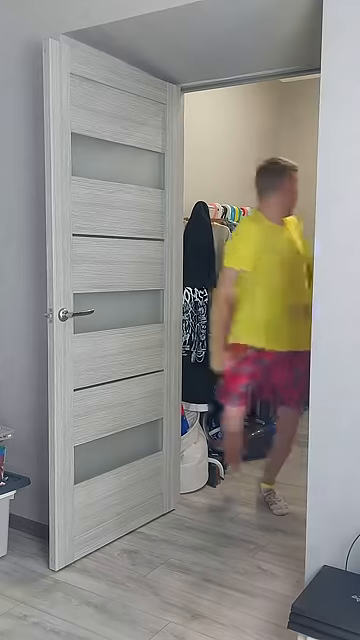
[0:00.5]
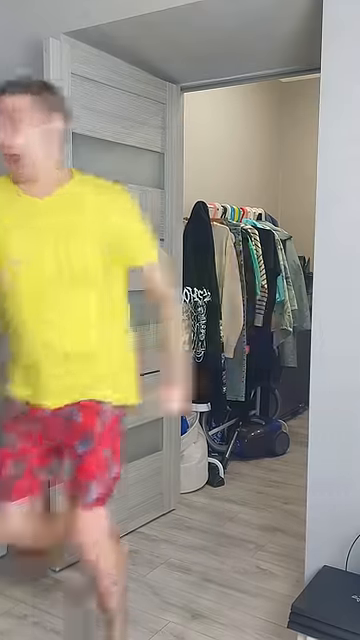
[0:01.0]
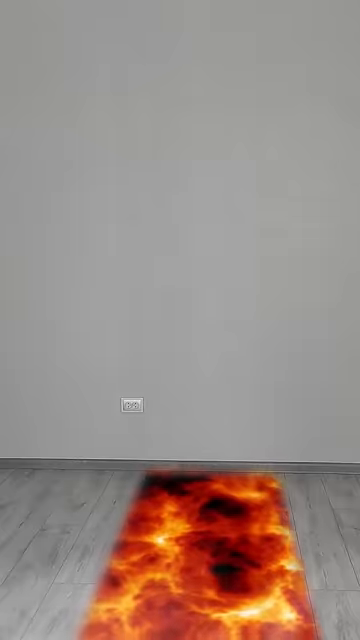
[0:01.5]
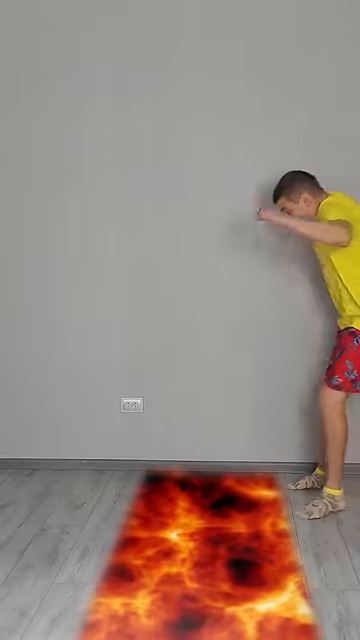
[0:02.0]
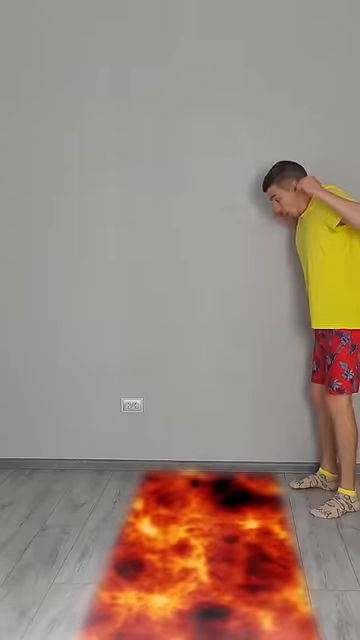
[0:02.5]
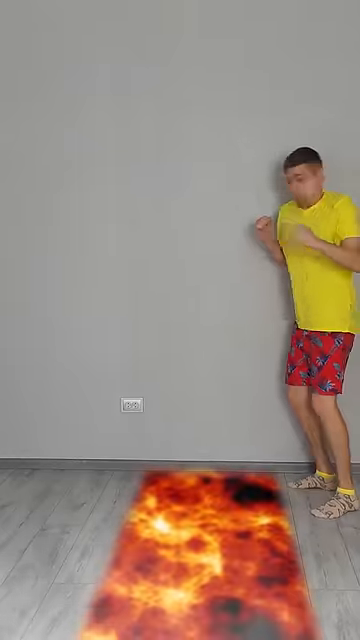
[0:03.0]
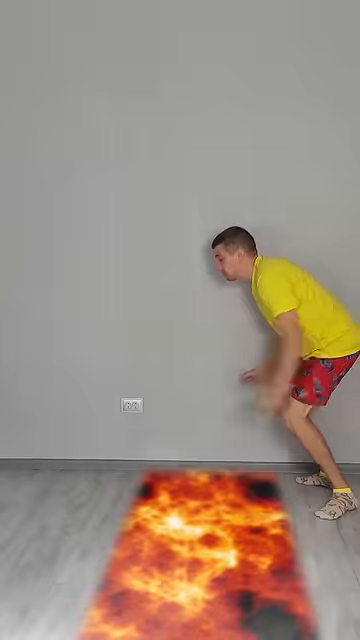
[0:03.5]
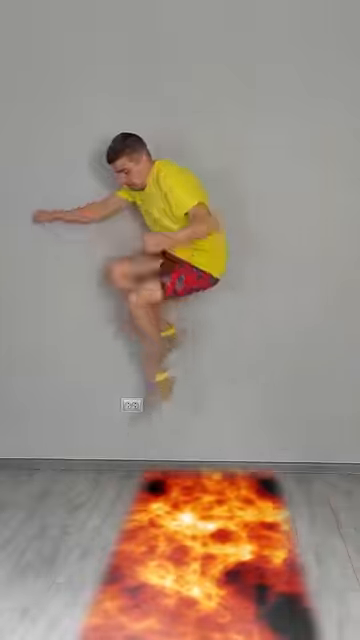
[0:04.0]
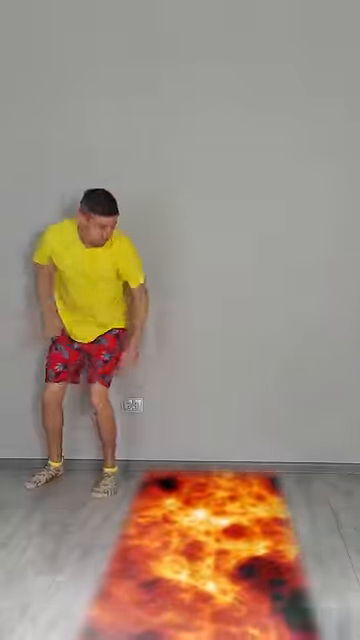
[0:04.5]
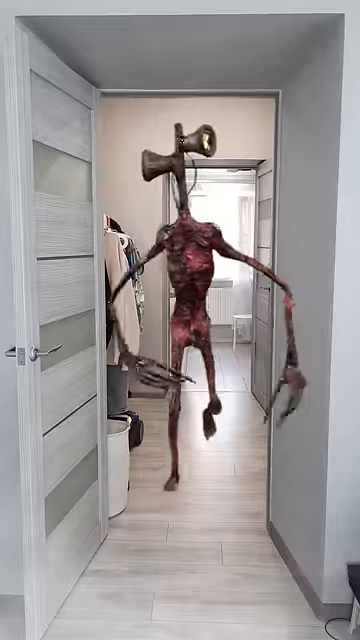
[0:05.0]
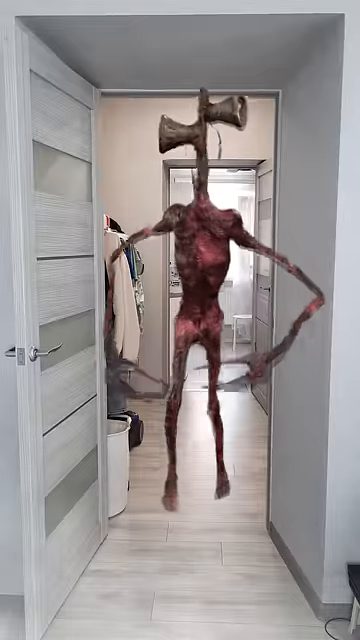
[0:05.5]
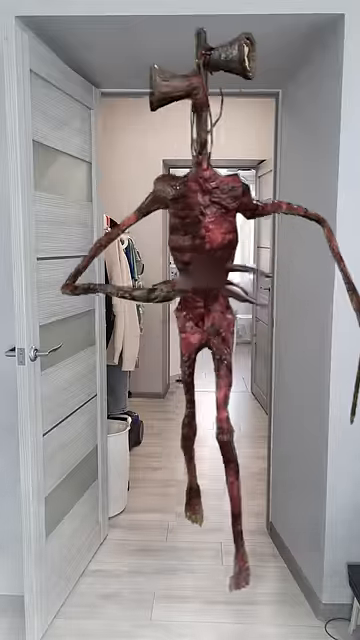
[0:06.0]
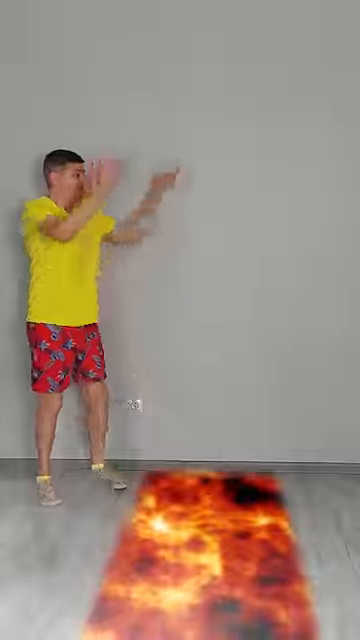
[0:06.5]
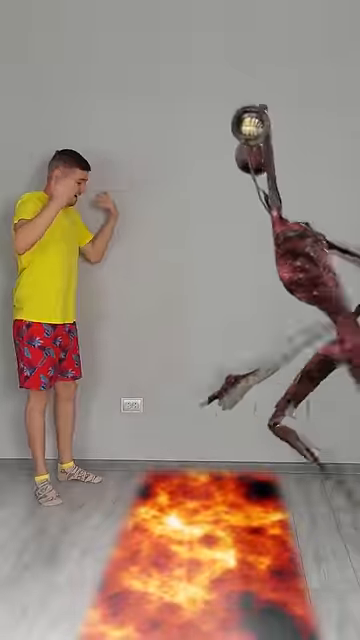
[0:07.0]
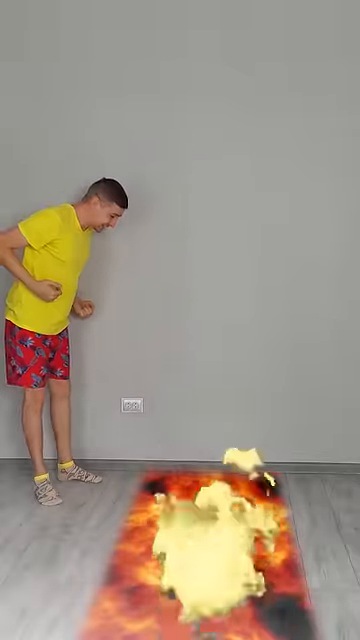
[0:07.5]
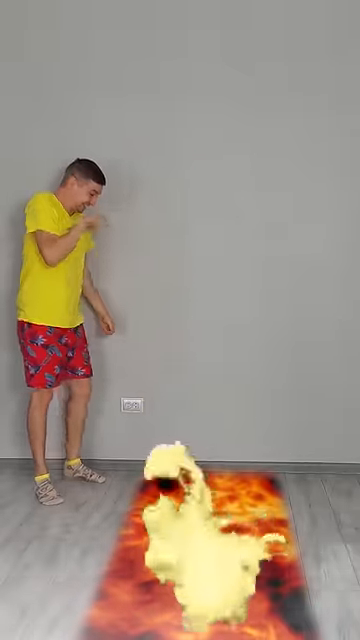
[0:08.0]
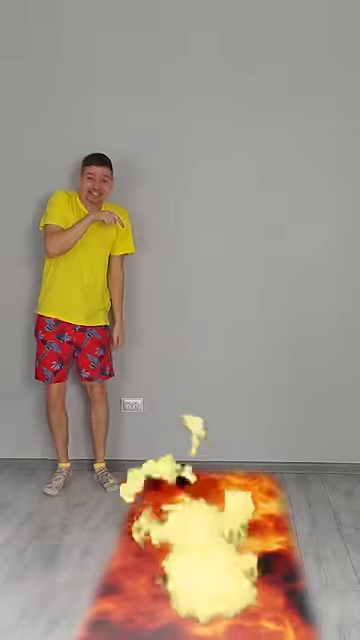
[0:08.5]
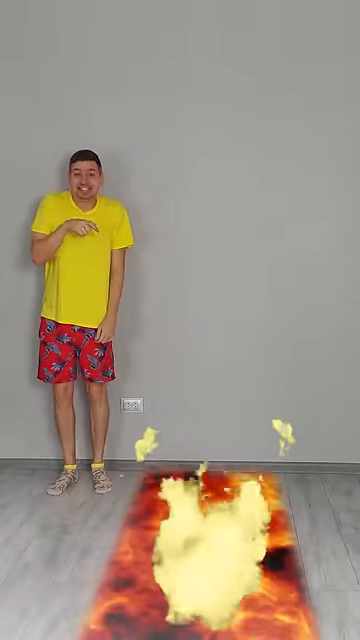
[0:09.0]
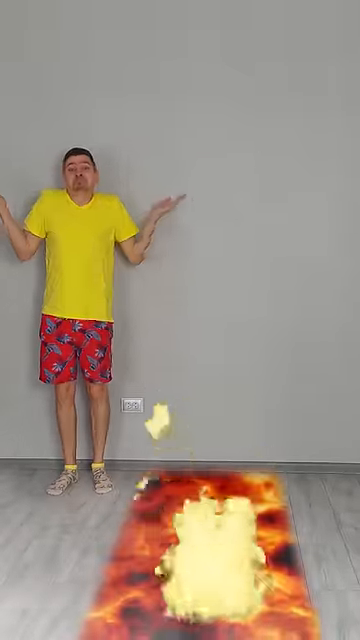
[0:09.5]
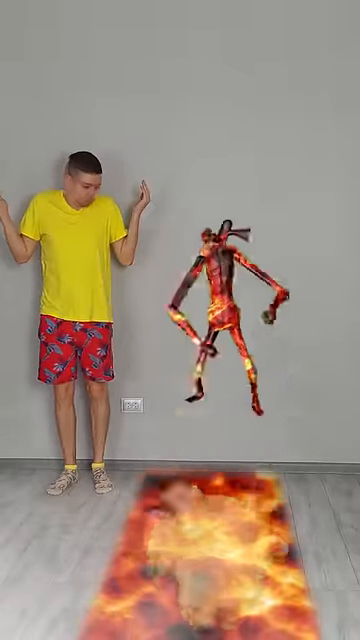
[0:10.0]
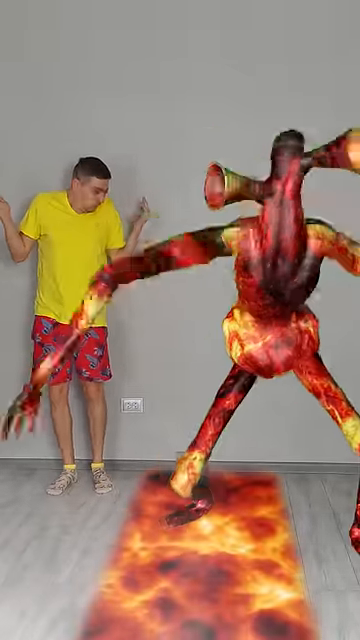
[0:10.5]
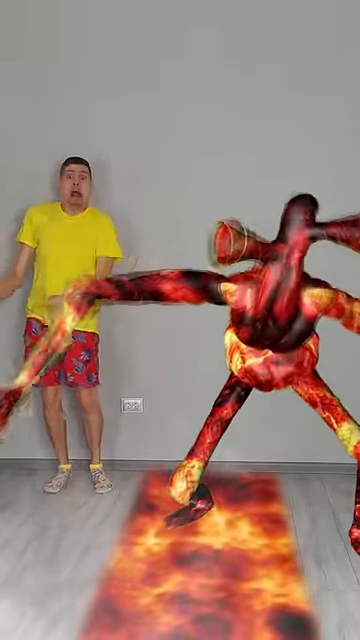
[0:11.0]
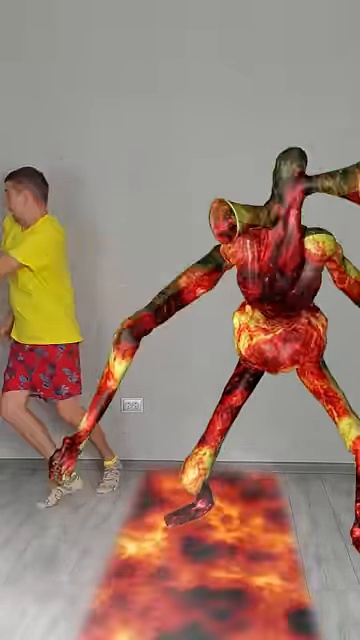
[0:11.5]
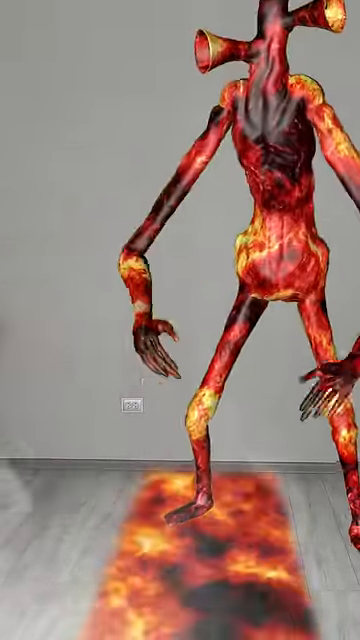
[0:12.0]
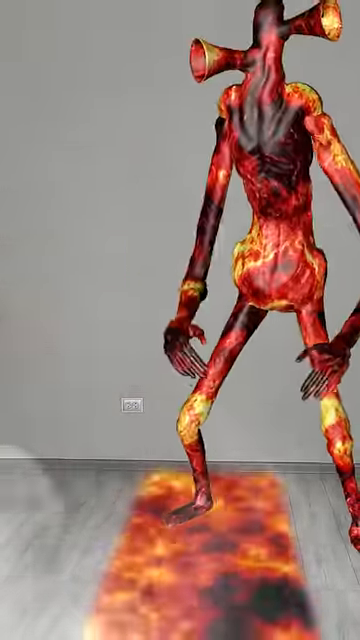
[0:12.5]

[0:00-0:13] The video is titled siren lava head game over #shorts. What seems to be a blonde kid in a yellow shirt is running, as if running away from something. He seems to be in his house, since a stack of clothes is hung up and part of the apartment is visible. There is fake lava on the ground, probably augmented reality. The guy in the yellow shirt jumps over the fake lava. A fake monster that seems to be an alien, apparently really skinny with long arms and with what looks like two speaker phones attached as its head, is chasing him; it jumps and falls into the lava. The guy in the yellow shirt says "haha you jumped into lava." The alien burns a little, then comes out angry, screams and acts scary towards him, and the guy runs away. The alien is clearly edited on with some kind of filter.